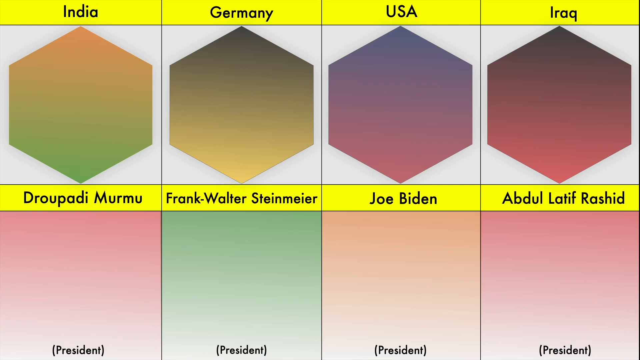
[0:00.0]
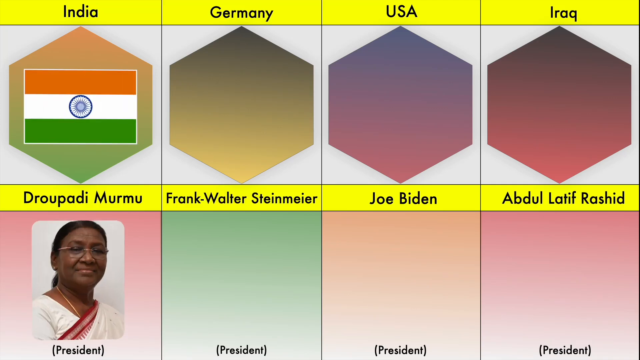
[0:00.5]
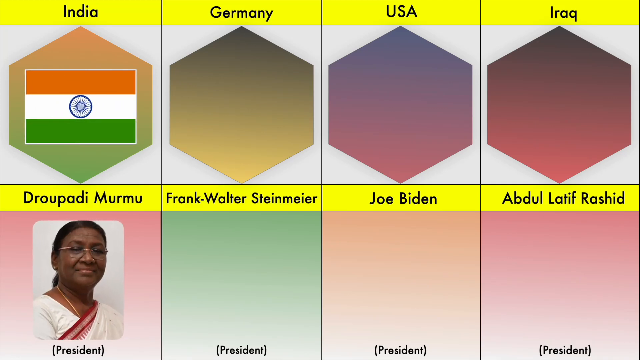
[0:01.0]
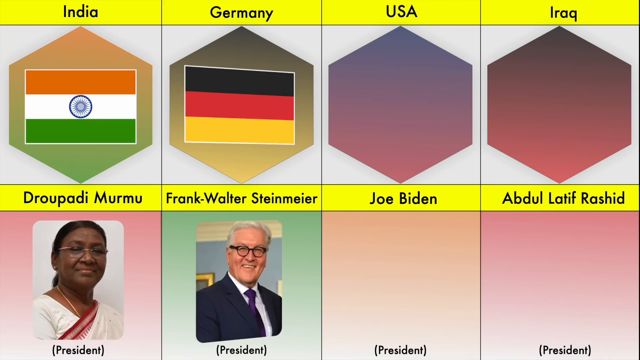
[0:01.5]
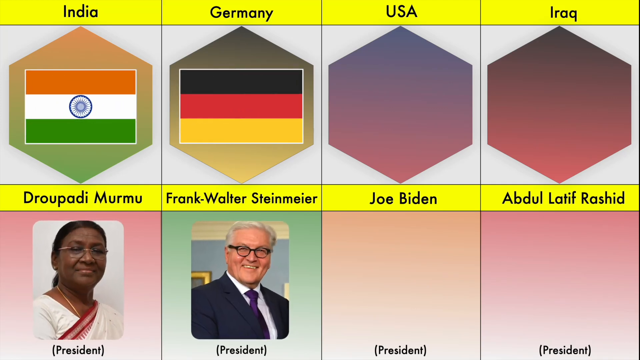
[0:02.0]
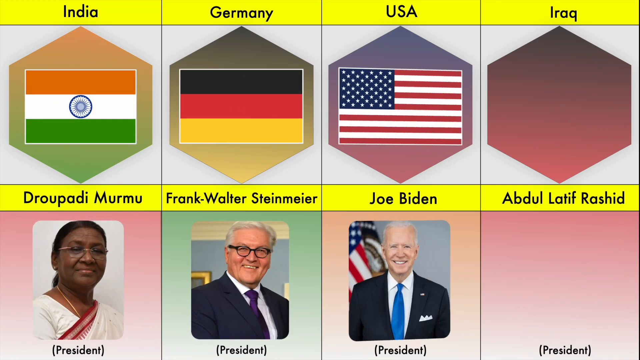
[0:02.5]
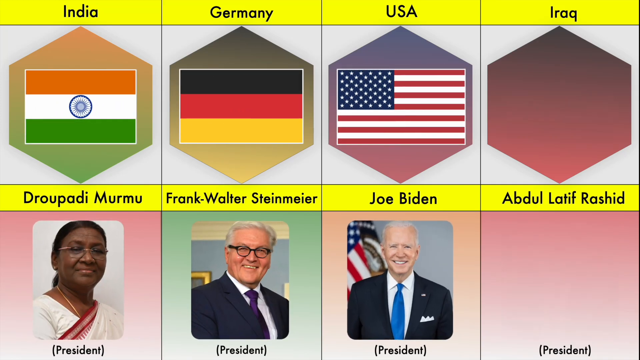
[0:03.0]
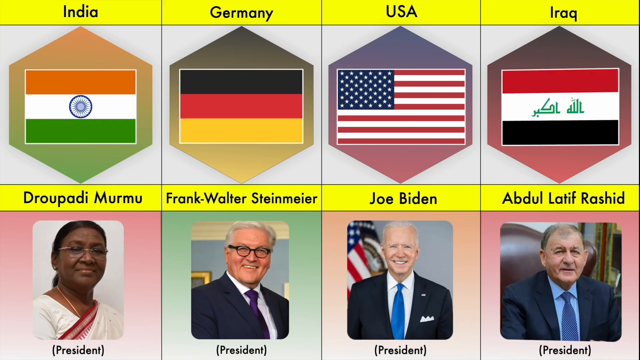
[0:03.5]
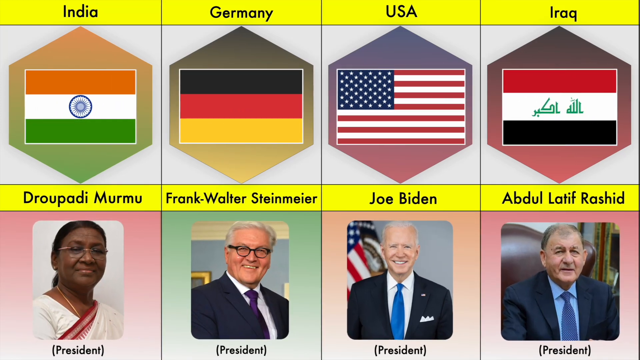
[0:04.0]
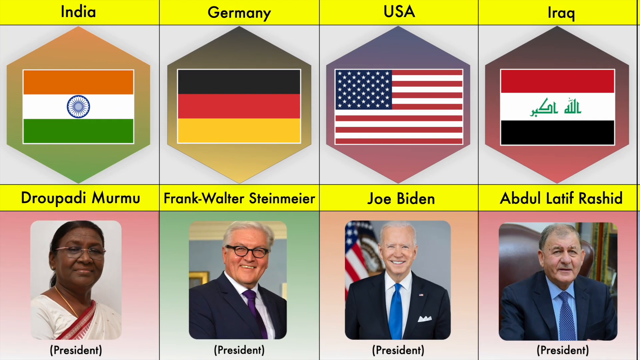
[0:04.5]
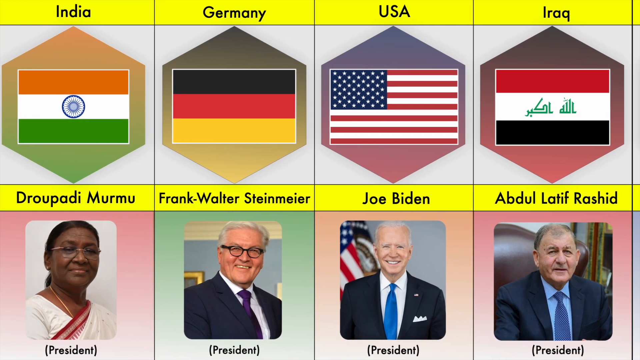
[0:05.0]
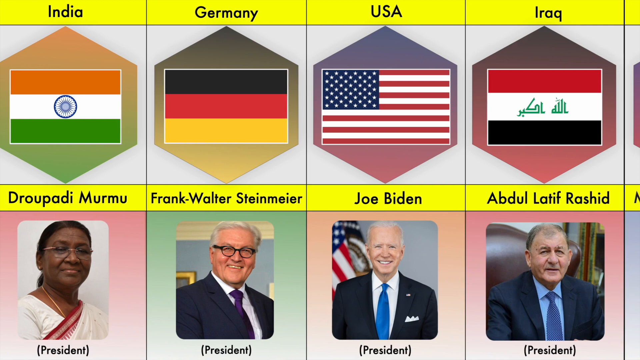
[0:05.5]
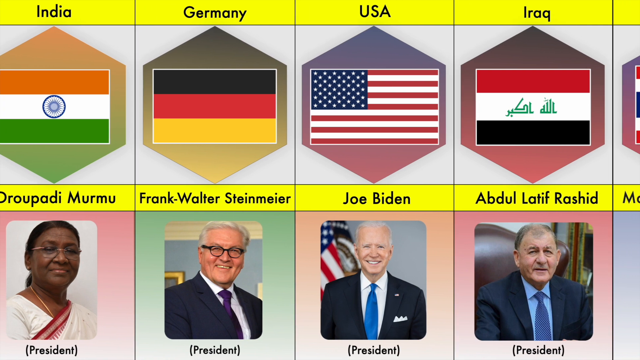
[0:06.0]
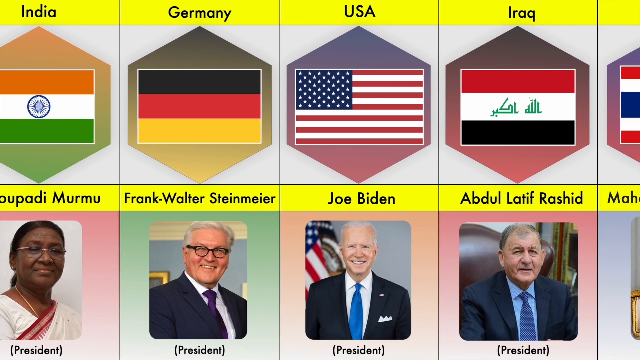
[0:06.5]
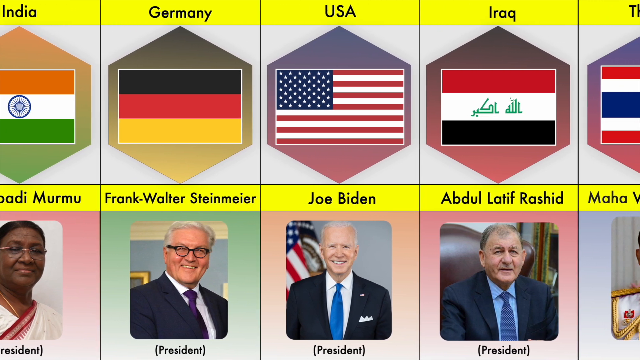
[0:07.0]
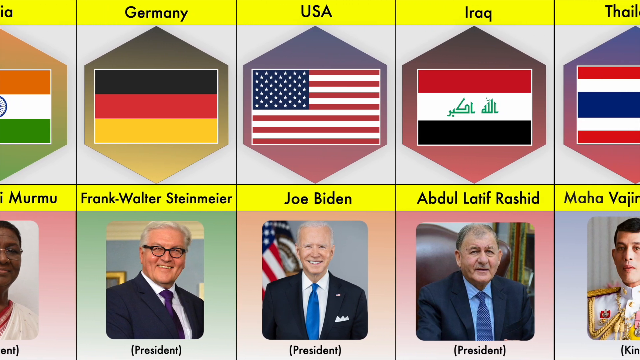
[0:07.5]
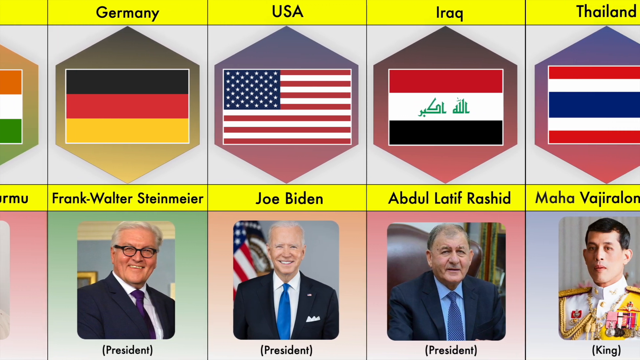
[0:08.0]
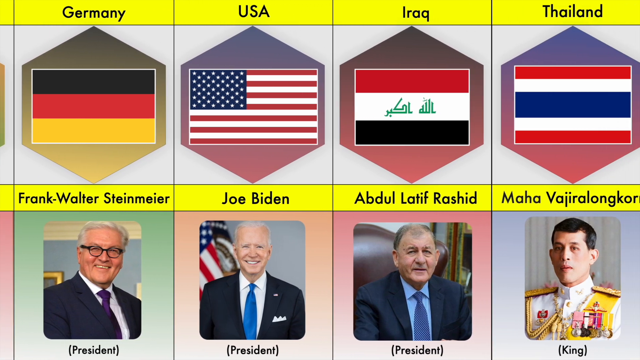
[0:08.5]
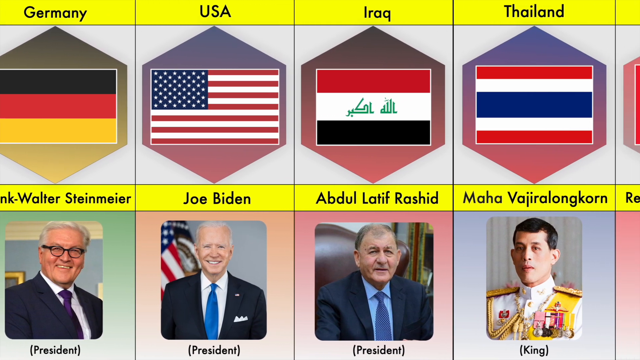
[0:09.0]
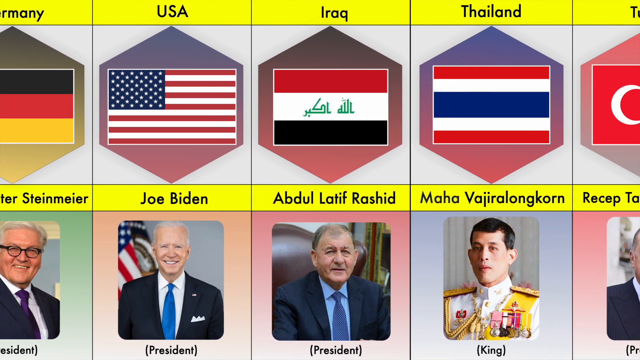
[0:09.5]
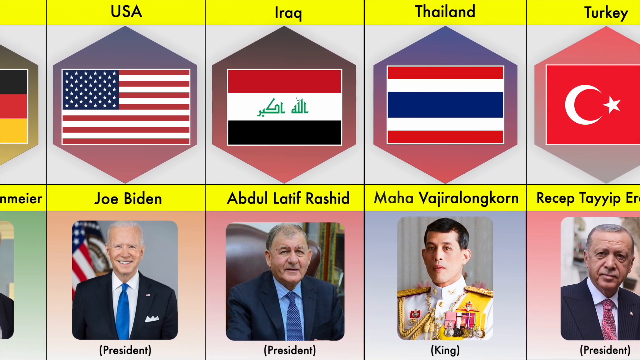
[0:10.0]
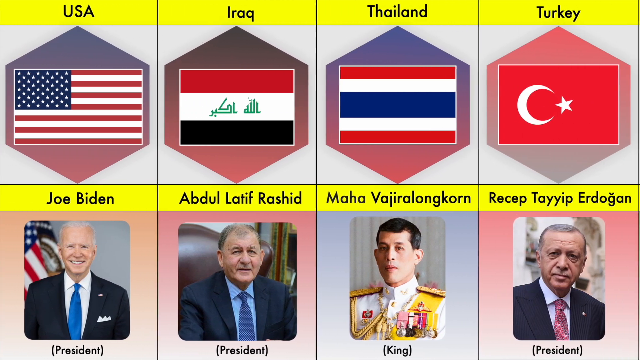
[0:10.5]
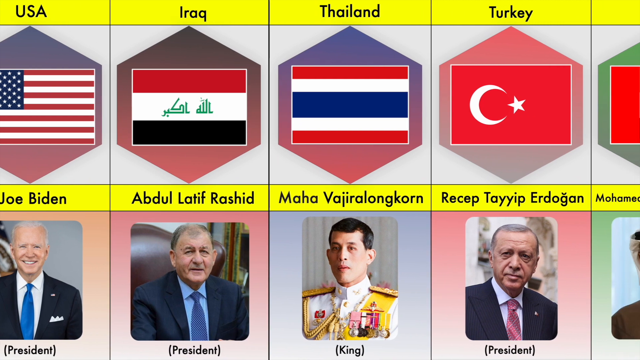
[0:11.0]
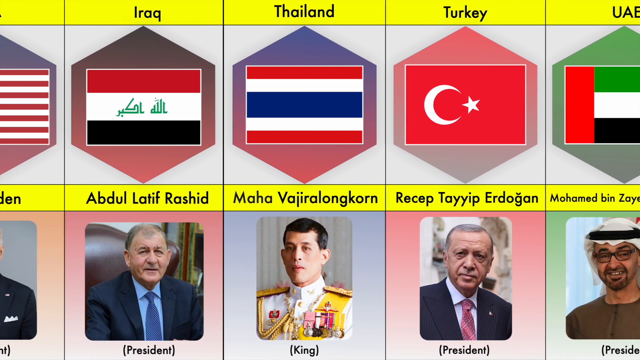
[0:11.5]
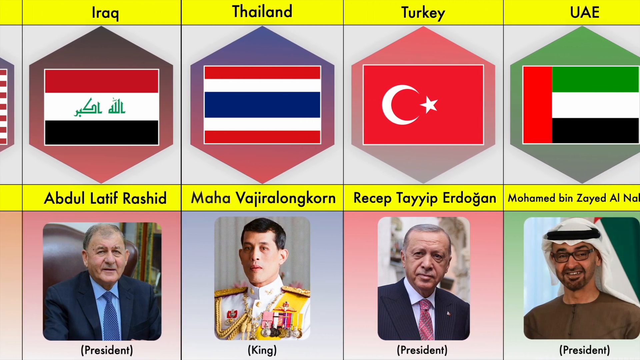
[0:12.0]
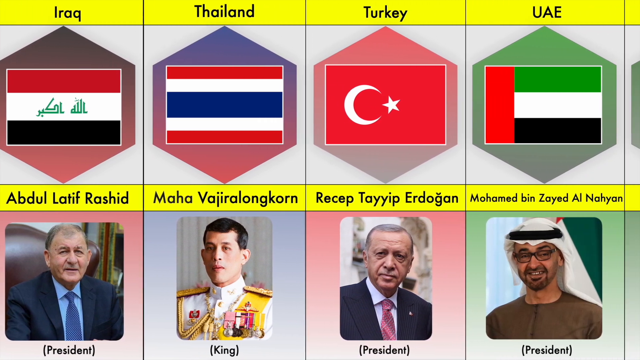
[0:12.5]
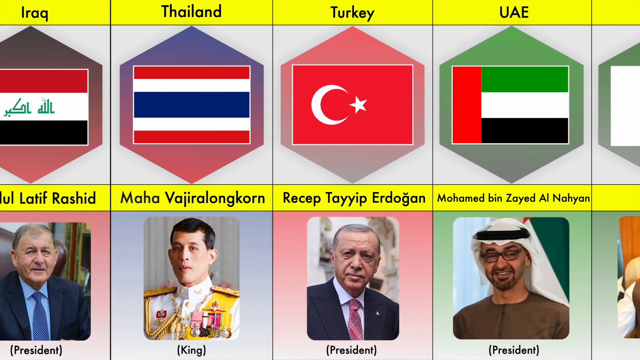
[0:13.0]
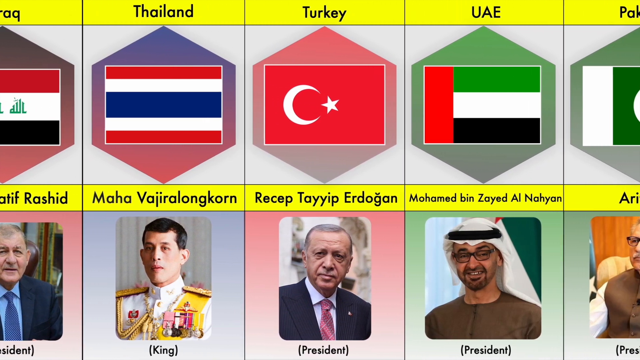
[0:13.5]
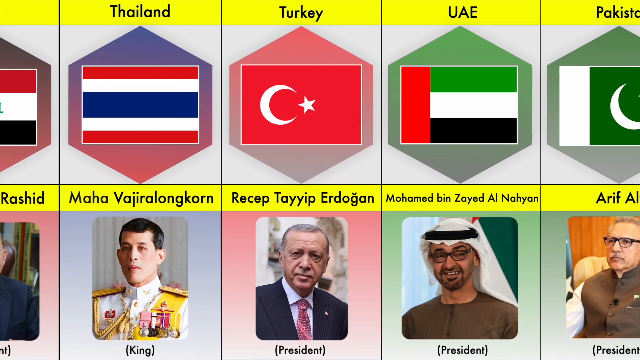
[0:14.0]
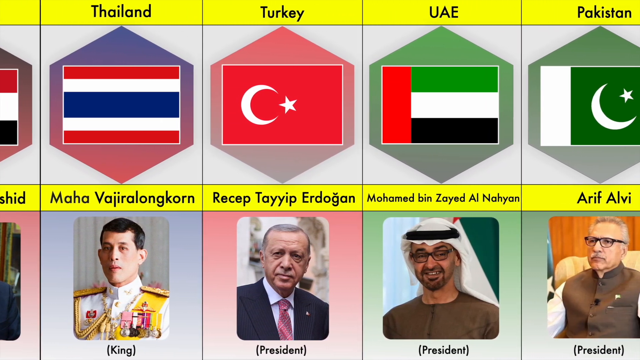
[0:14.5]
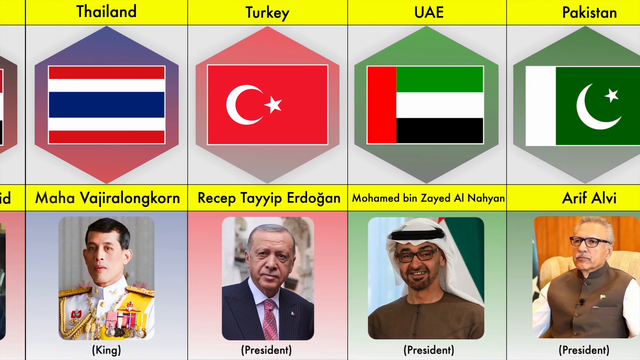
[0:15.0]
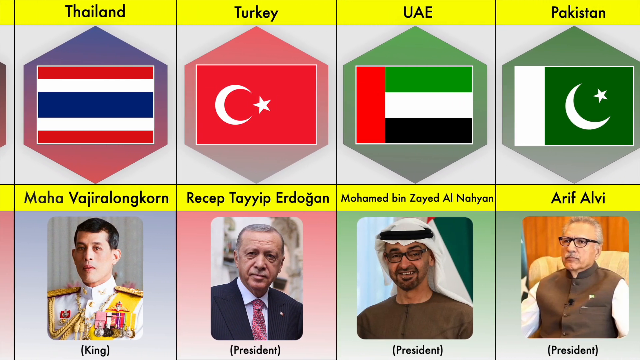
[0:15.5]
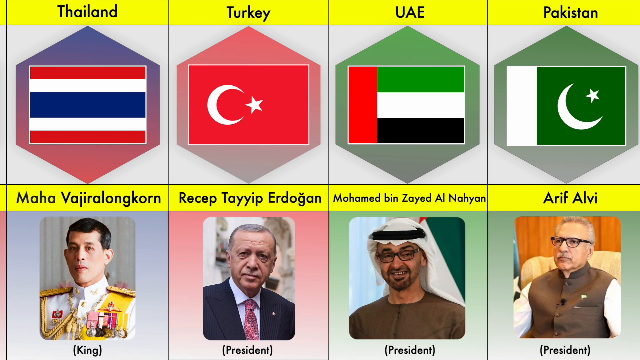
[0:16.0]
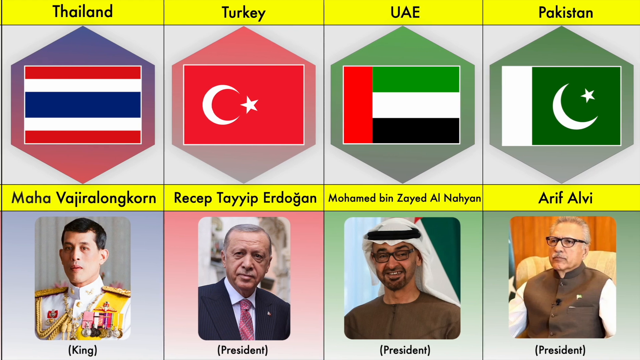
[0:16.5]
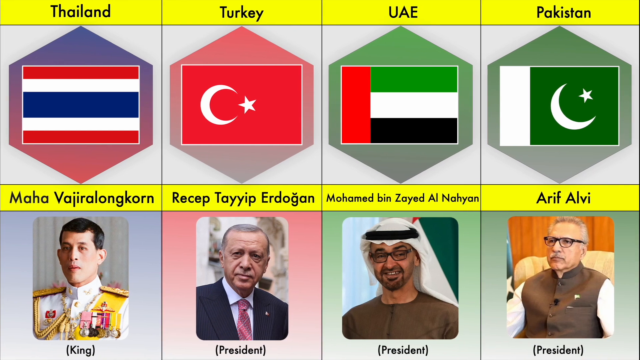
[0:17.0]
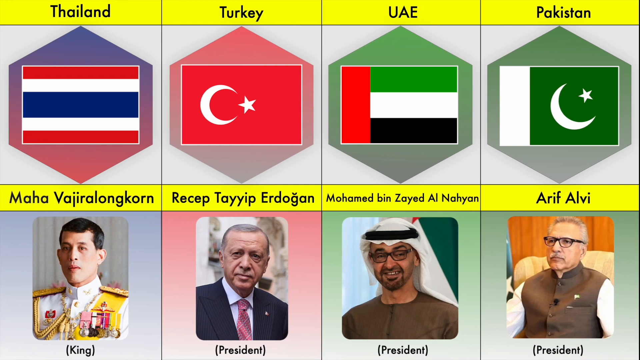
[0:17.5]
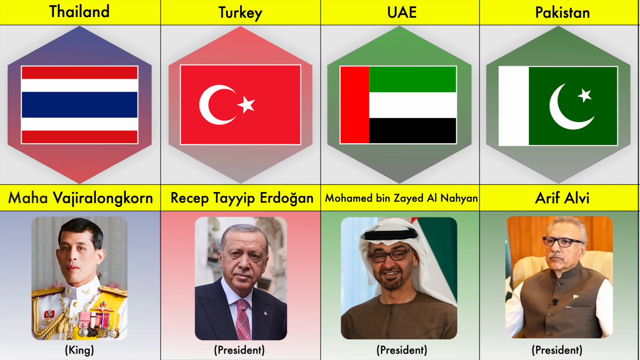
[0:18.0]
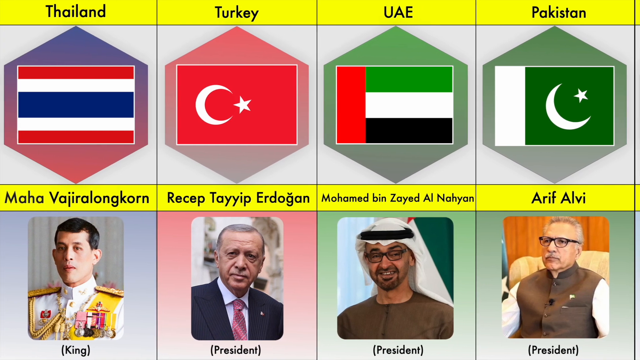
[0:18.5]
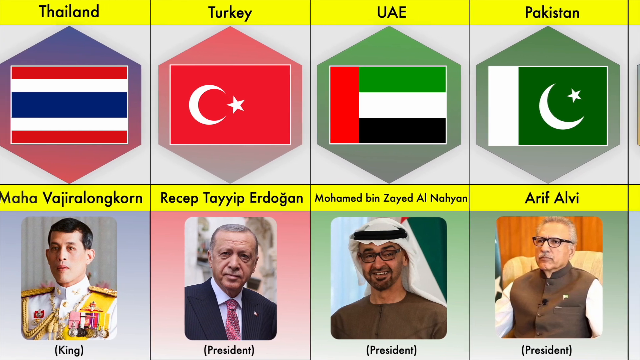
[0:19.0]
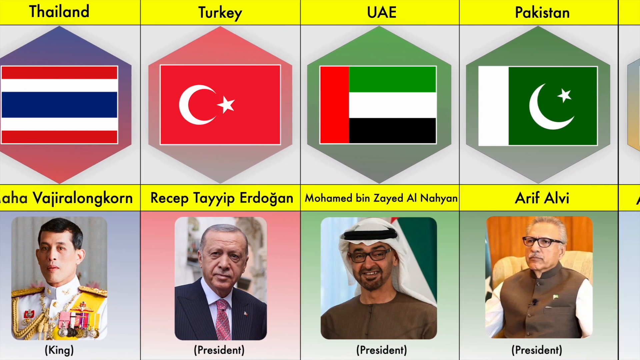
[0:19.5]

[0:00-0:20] Leaders are labeled with their titles and names: the President of India is shown as Tripathi Murmu, the President of Germany as Frank Walter Steinmeier, the President of the United States as Joe Biden, and, on the far right of the screen, the President of Iraq as Abdul Latif Rashid. The display slowly transitions as all the flags and people move to the left, and new people, including those from Thailand, Turkey, the UAE and Pakistan, appear in the same type of layout in the places the earlier people occupied. These new leaders are also shown with their various flags and logos, and they face the camera as if posing for a photo shoot.